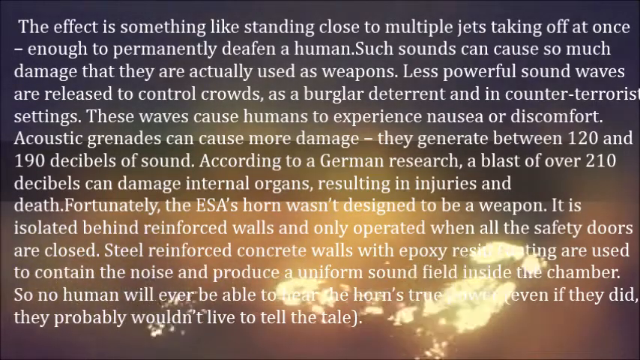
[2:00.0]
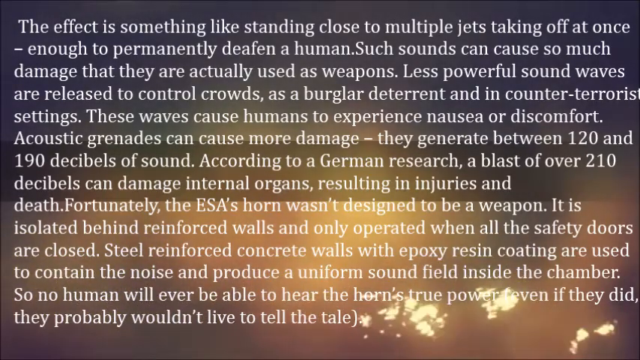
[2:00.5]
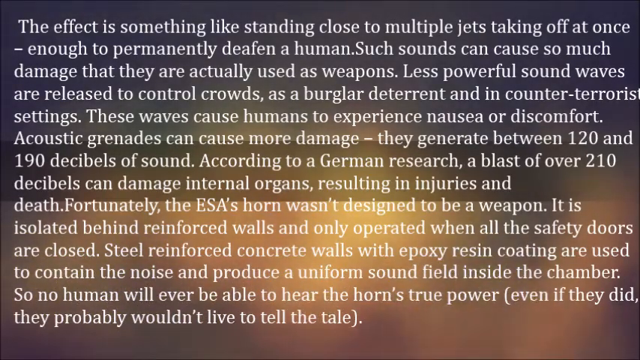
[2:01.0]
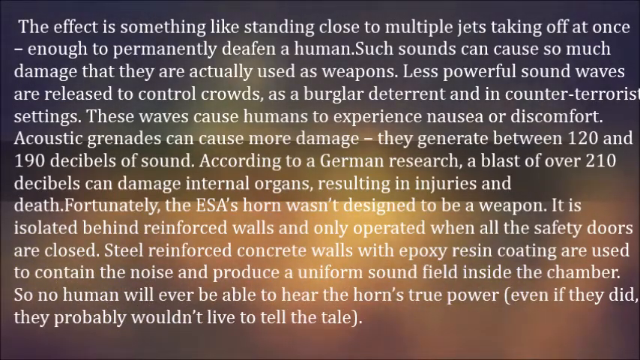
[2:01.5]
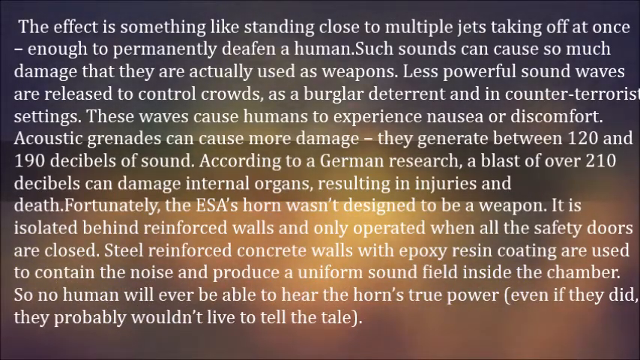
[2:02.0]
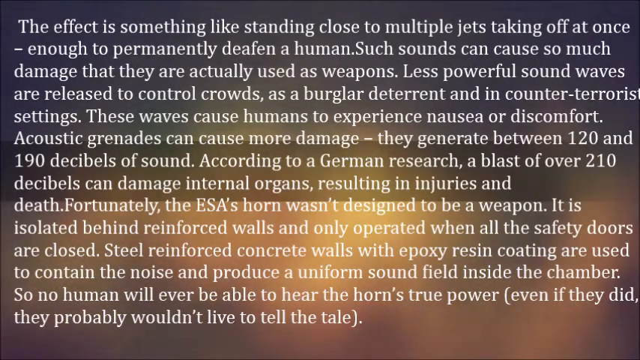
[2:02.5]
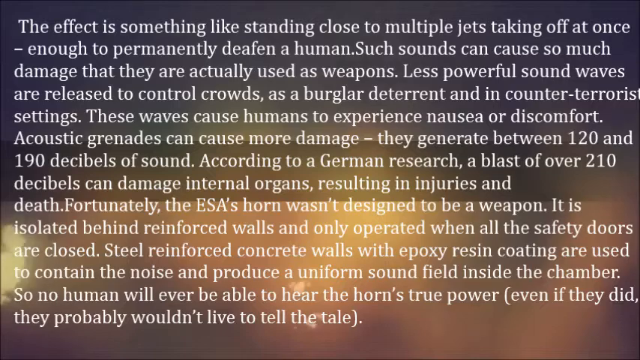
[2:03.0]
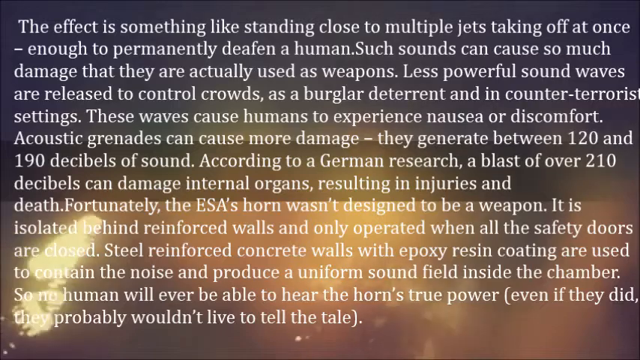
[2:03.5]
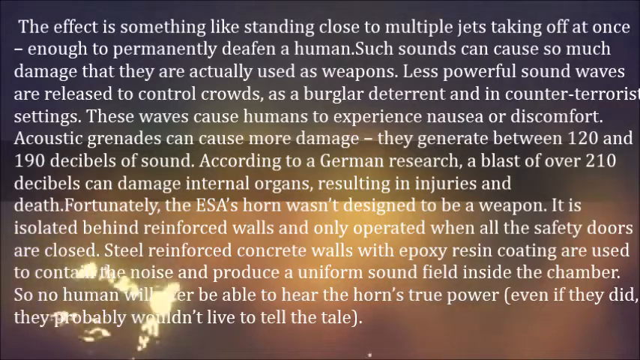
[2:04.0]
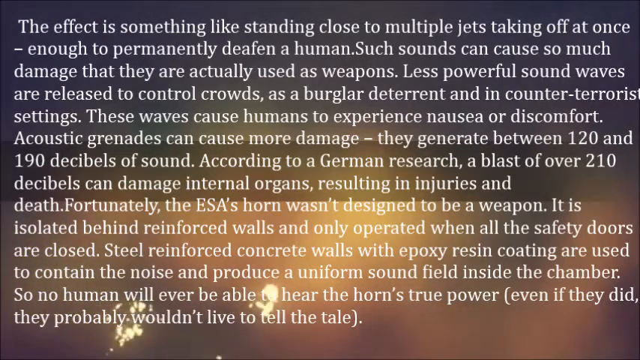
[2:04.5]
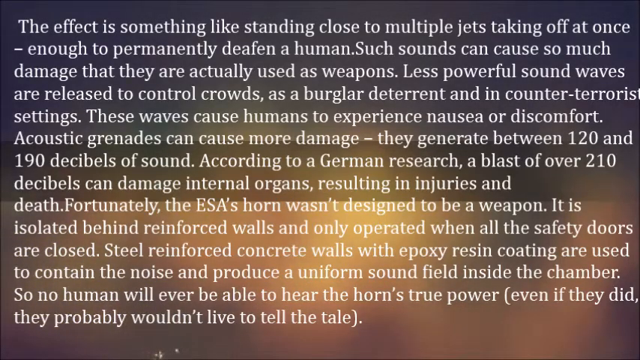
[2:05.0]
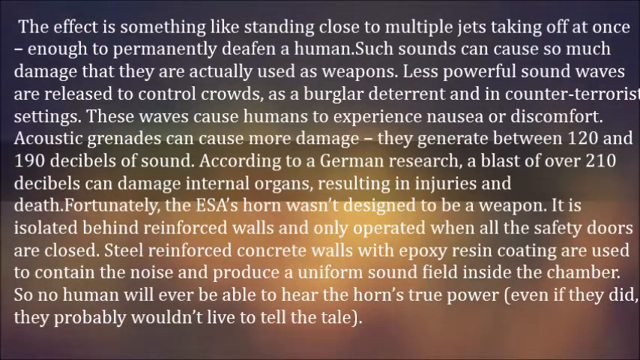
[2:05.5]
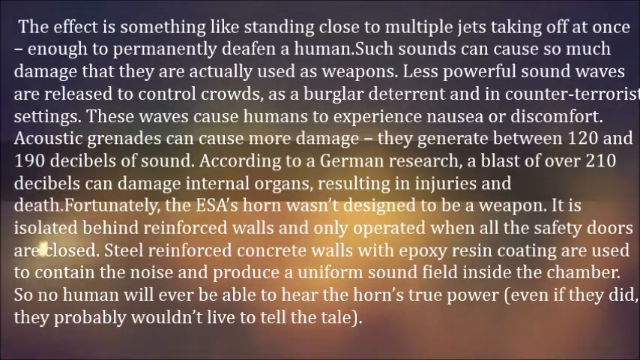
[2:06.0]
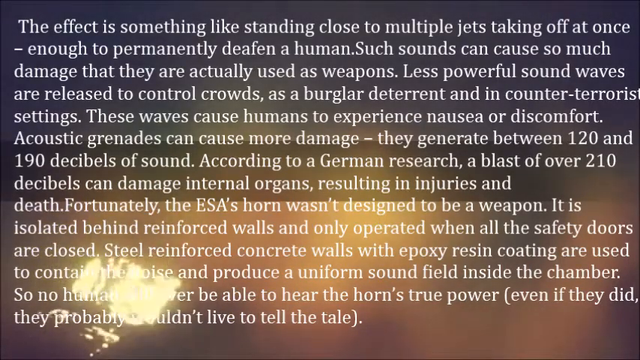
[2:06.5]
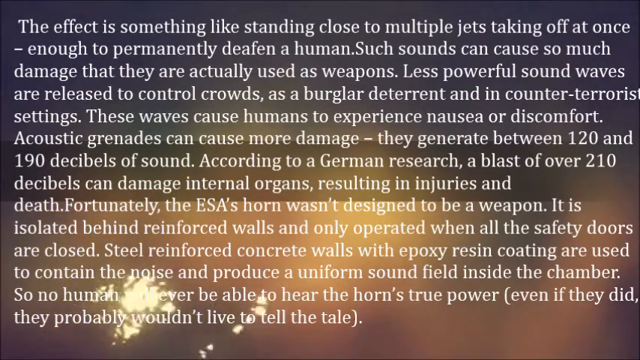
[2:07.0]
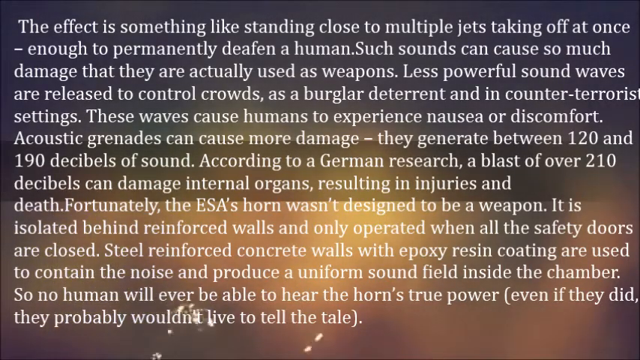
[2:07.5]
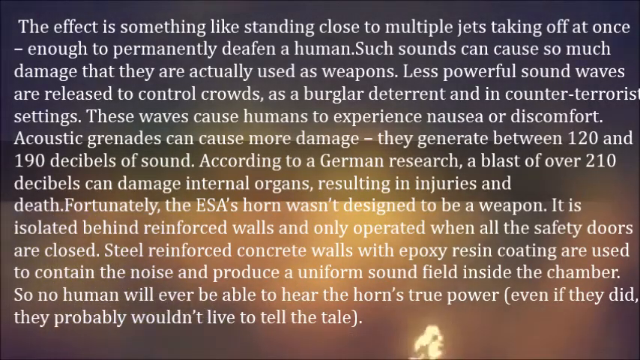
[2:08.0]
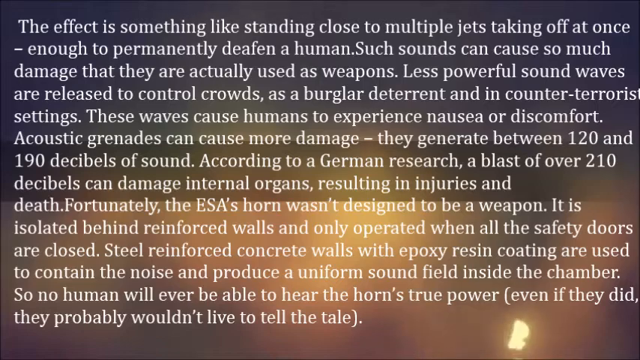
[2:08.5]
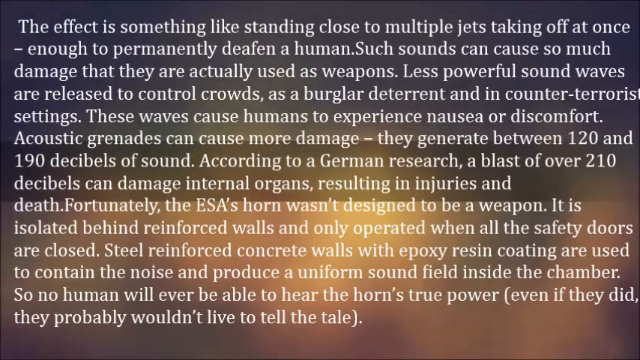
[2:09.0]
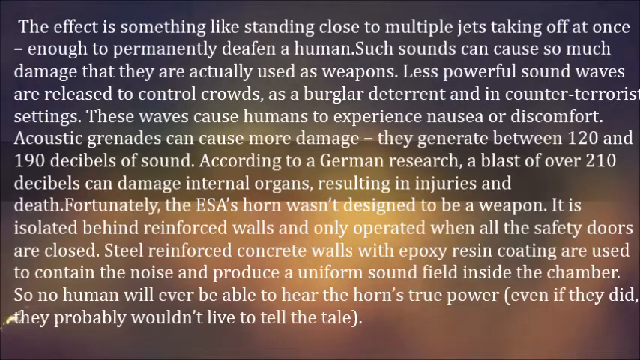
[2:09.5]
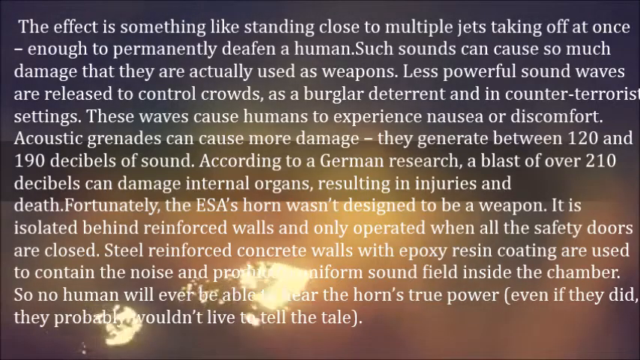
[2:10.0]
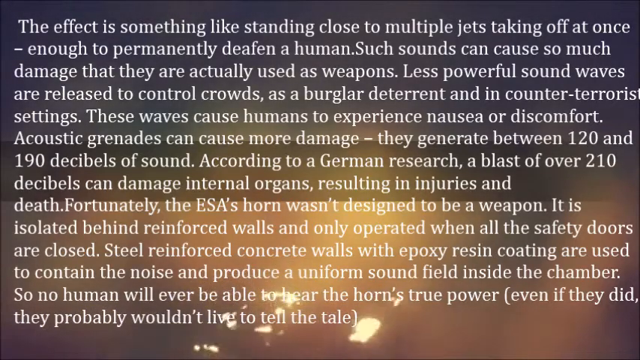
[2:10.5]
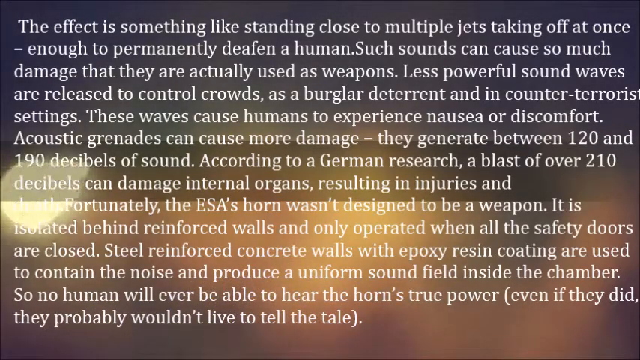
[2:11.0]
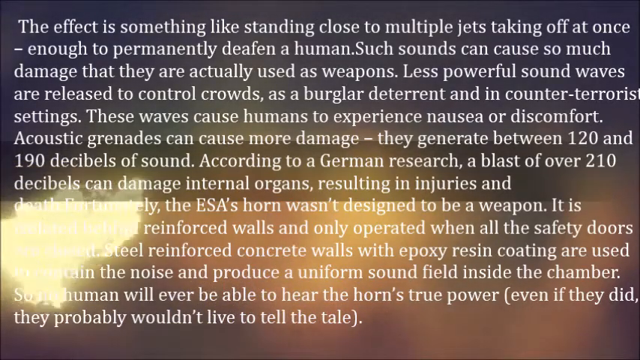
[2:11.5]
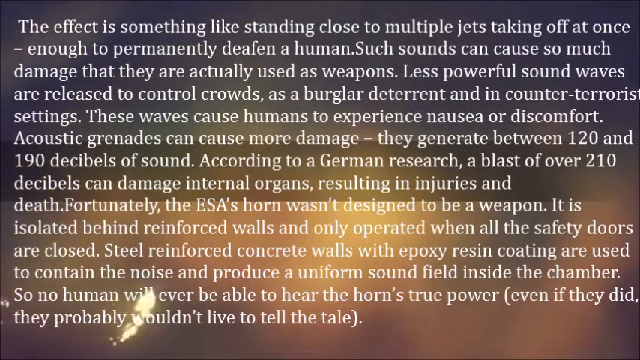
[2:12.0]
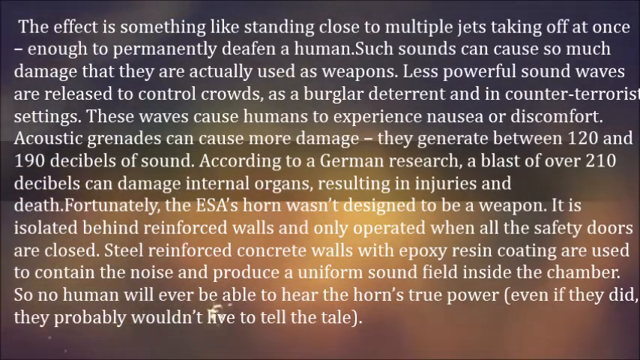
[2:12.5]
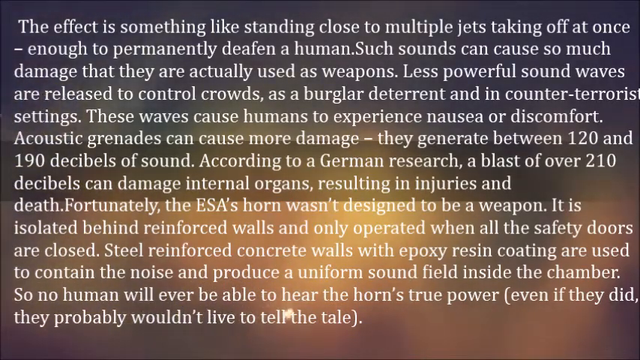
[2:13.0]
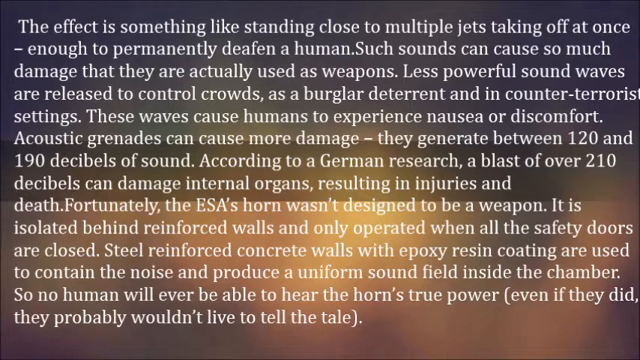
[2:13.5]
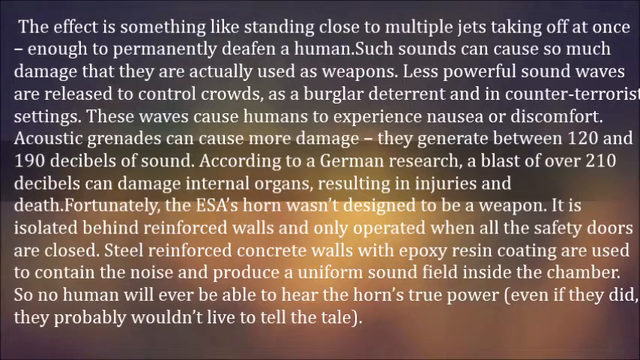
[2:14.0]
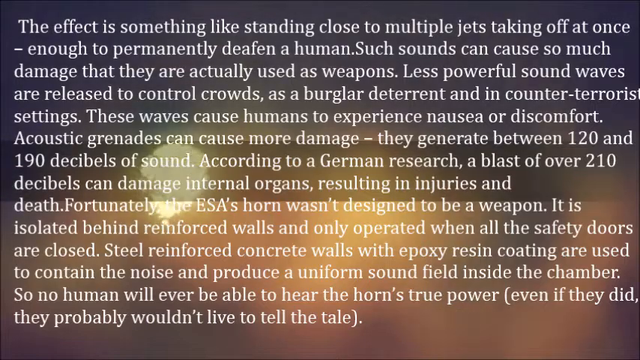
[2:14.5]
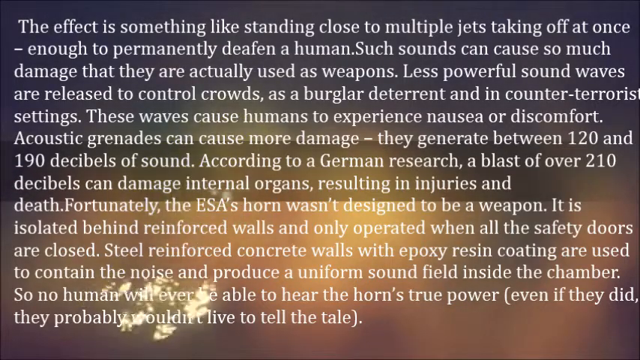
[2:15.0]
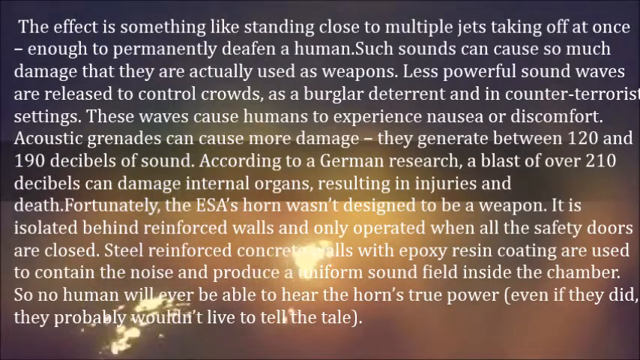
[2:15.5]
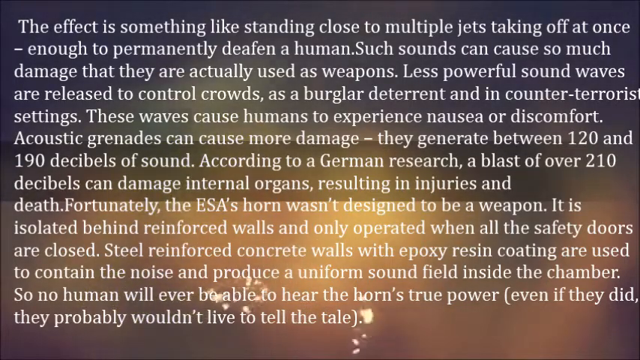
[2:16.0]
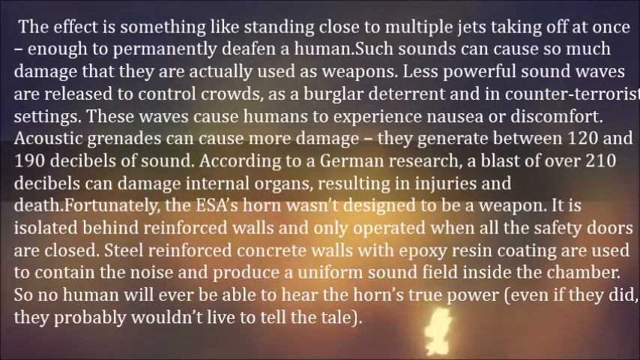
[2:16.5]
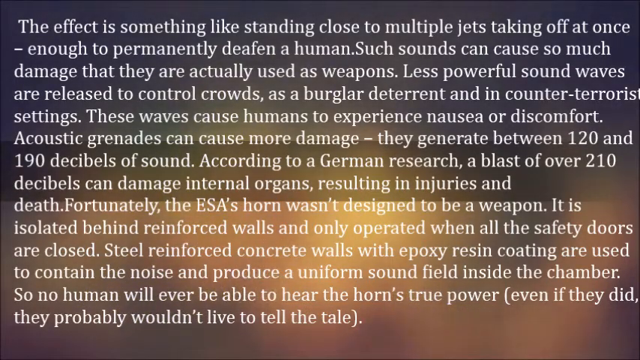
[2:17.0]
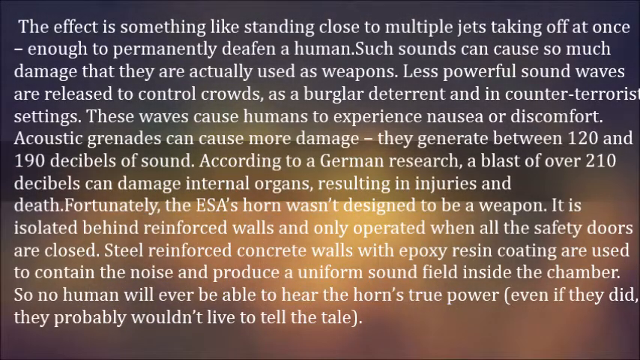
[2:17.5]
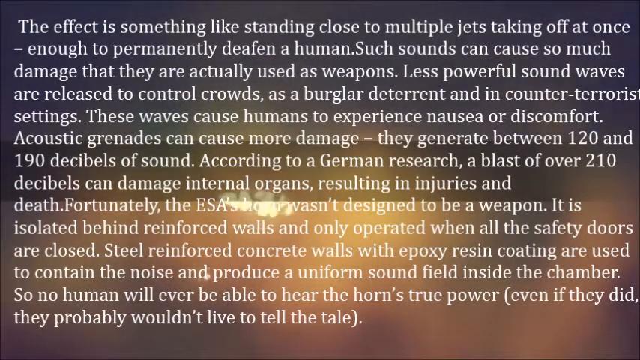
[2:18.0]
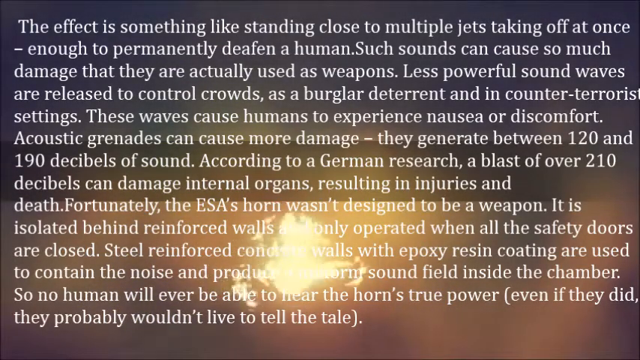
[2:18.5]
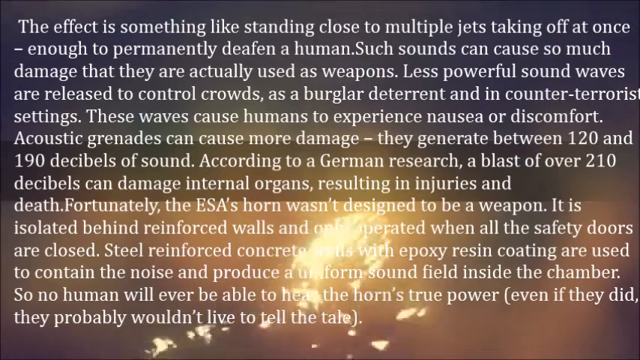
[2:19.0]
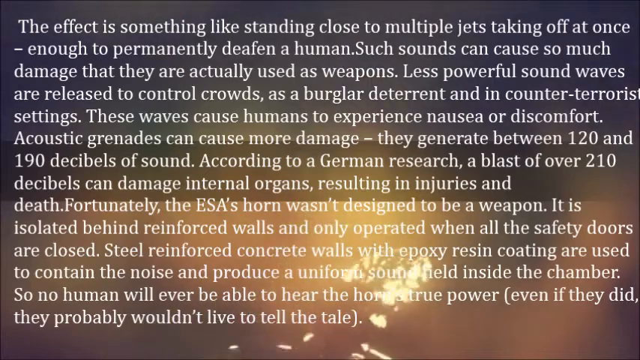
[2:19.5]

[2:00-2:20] The same paragraph is still shown, stating that a German researcher found a blast over 210 decibels can damage internal organs, resulting in injuries and death, and that the horn is used behind steel-reinforced concrete walls with epoxy resin coating to contain the sound inside the chamber.